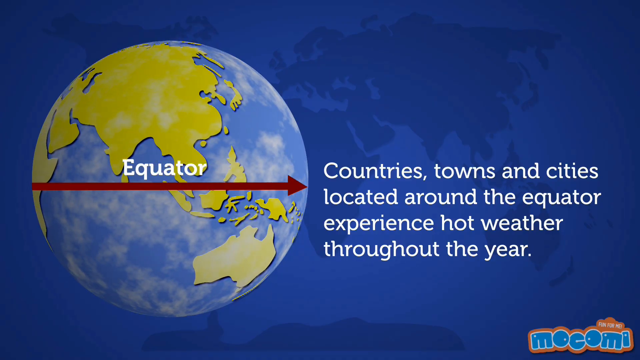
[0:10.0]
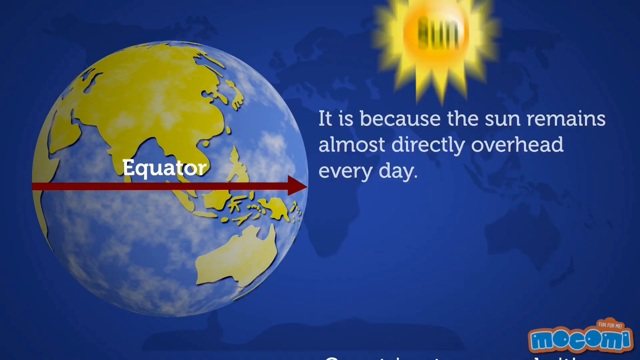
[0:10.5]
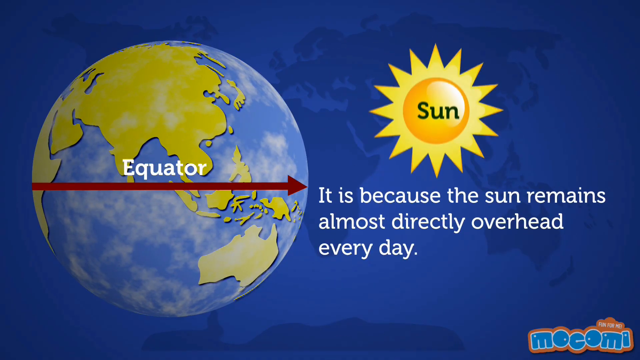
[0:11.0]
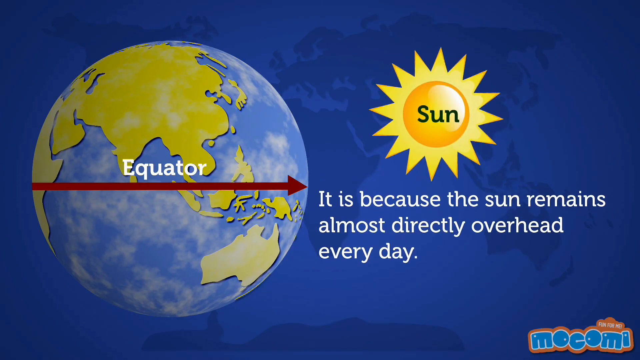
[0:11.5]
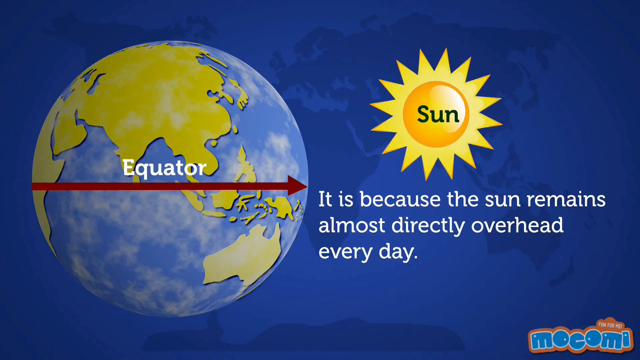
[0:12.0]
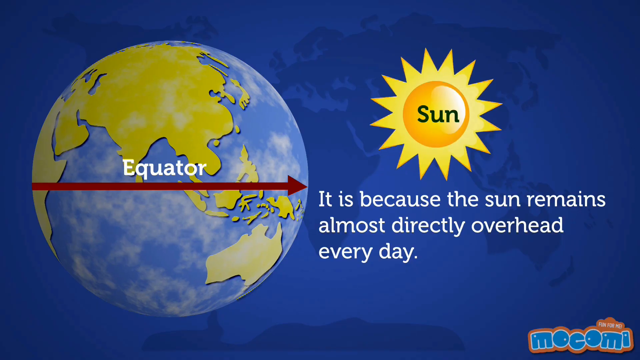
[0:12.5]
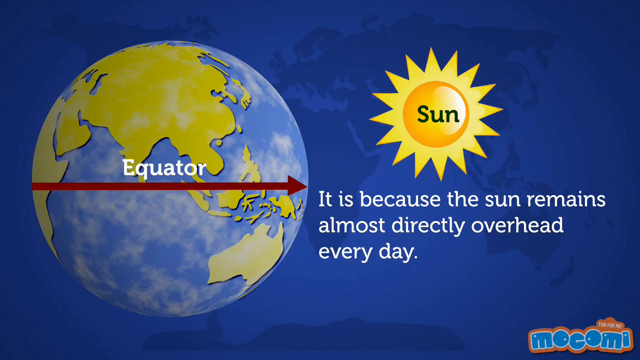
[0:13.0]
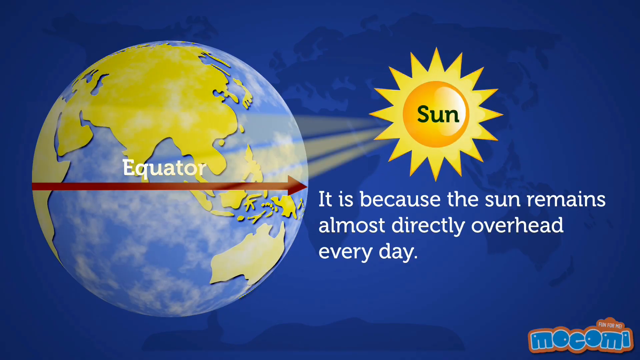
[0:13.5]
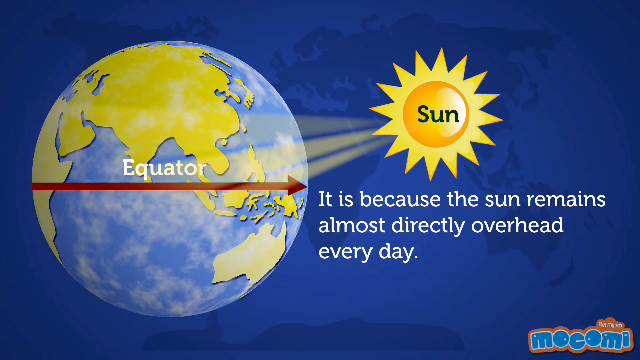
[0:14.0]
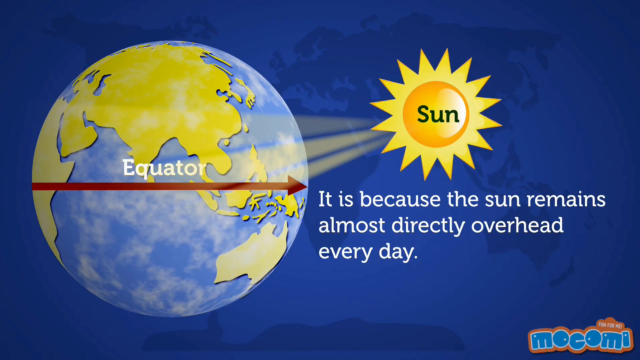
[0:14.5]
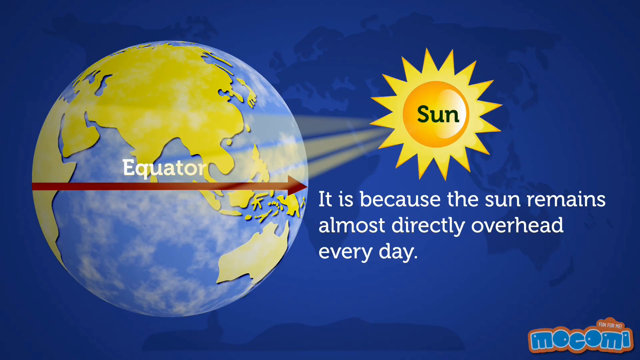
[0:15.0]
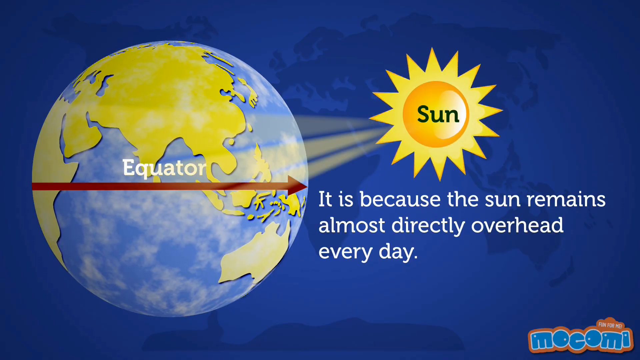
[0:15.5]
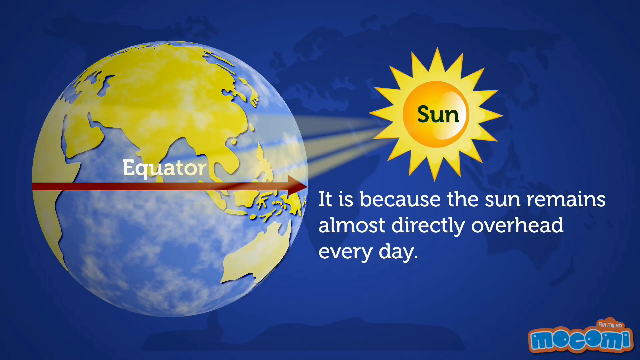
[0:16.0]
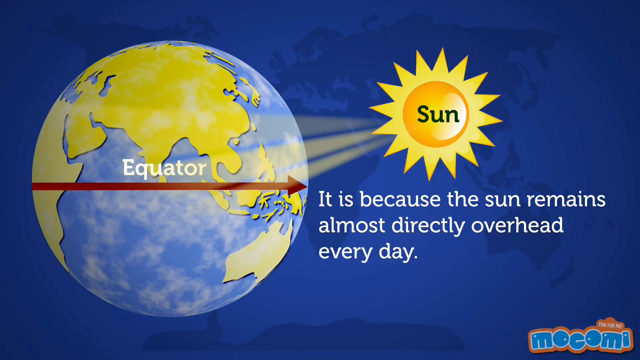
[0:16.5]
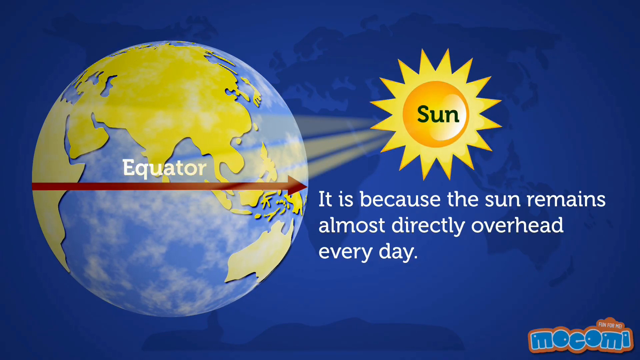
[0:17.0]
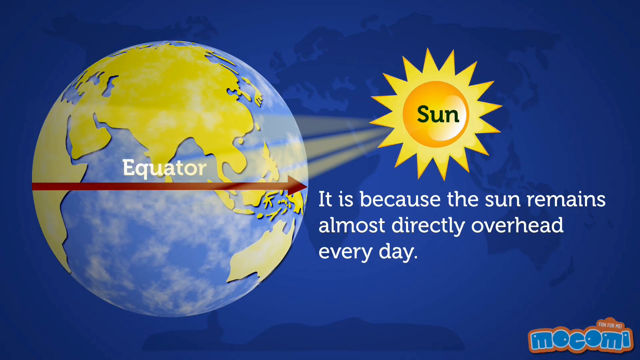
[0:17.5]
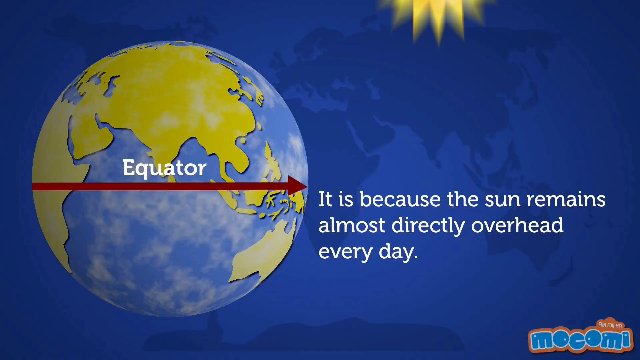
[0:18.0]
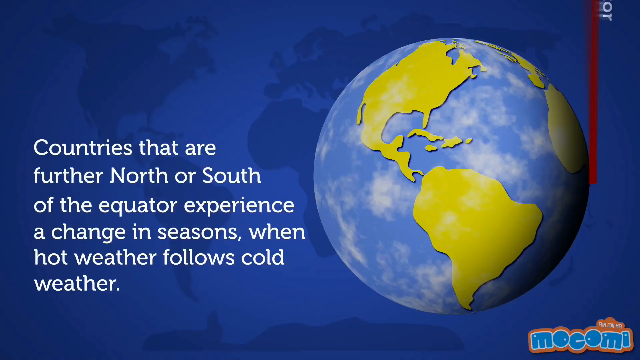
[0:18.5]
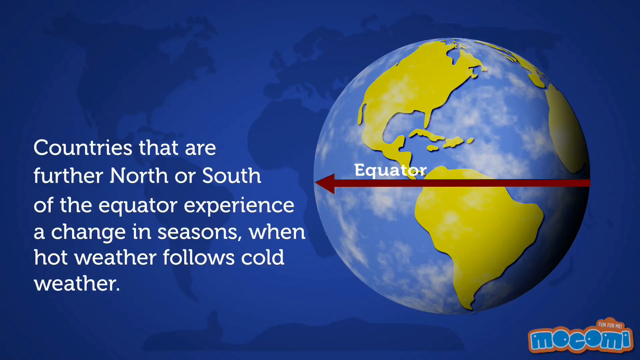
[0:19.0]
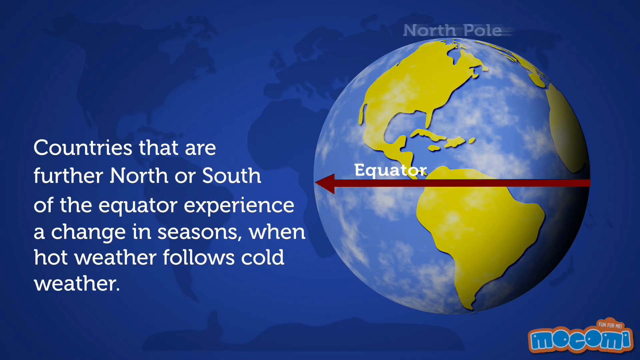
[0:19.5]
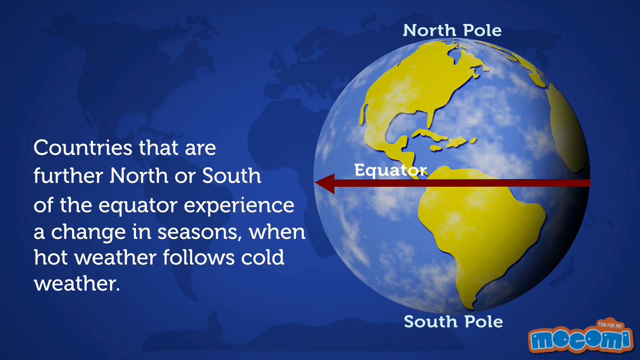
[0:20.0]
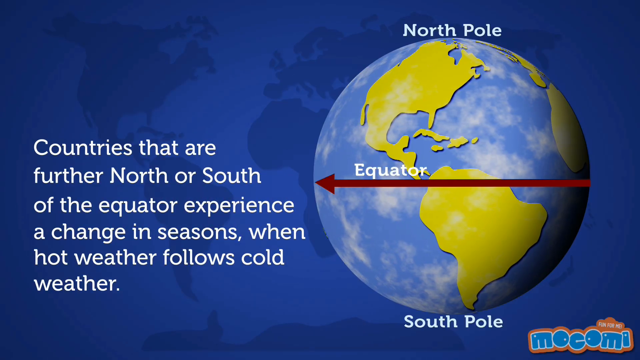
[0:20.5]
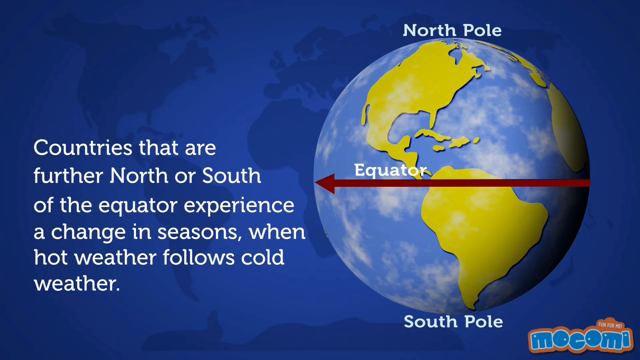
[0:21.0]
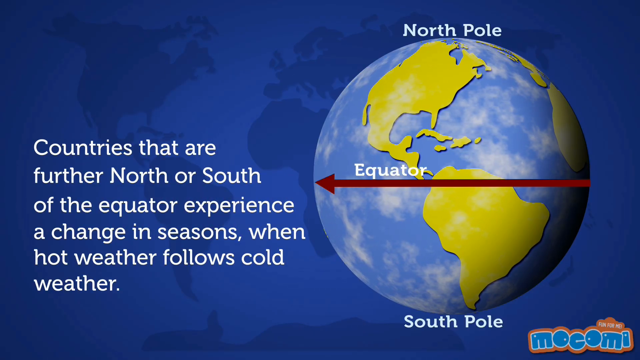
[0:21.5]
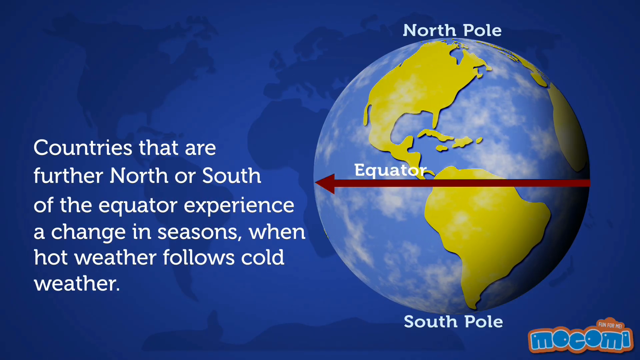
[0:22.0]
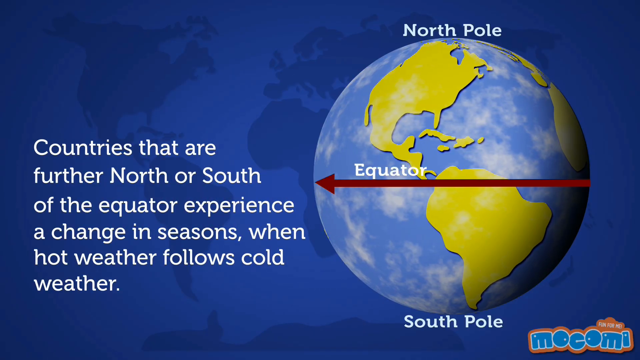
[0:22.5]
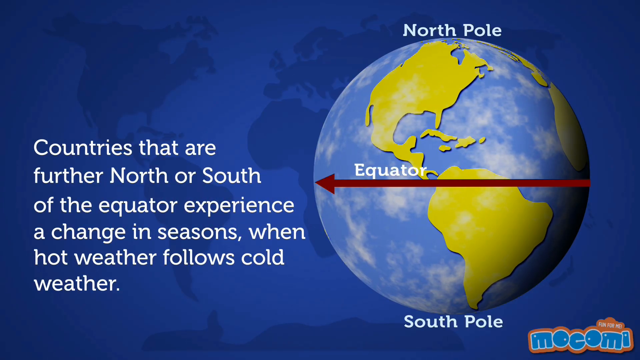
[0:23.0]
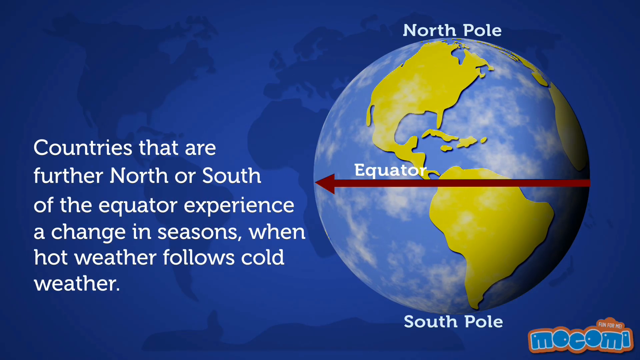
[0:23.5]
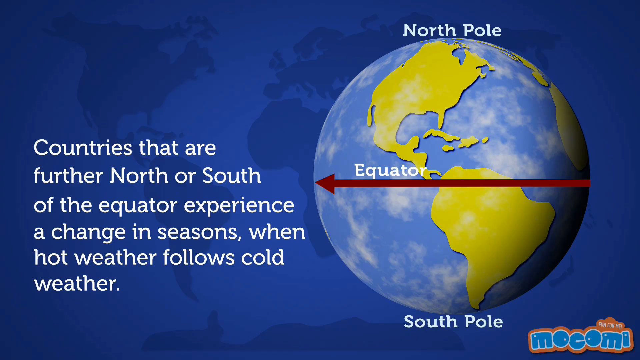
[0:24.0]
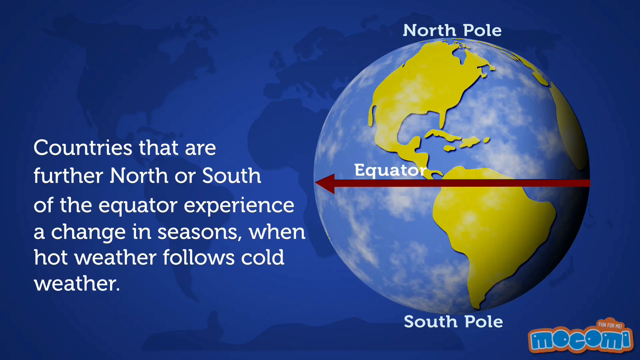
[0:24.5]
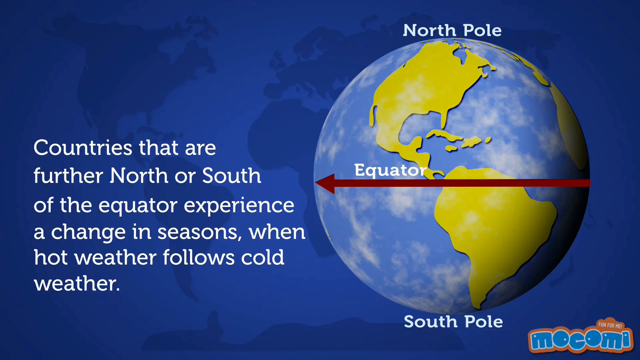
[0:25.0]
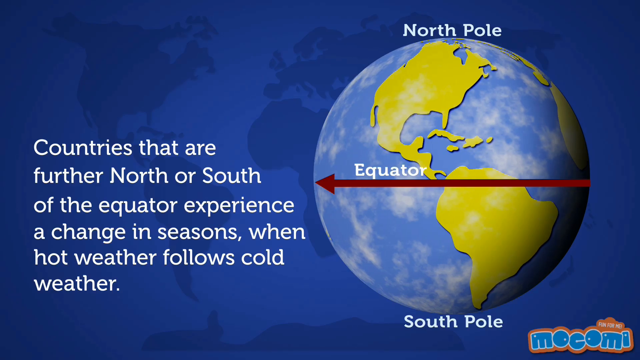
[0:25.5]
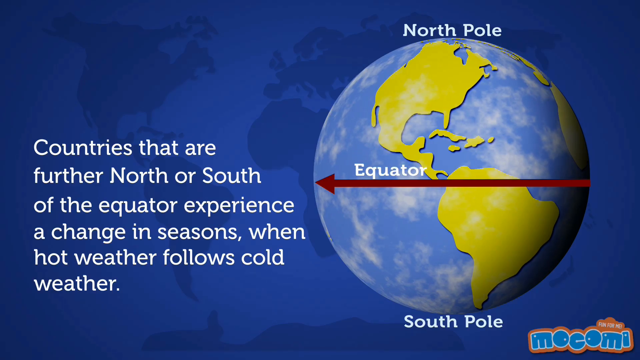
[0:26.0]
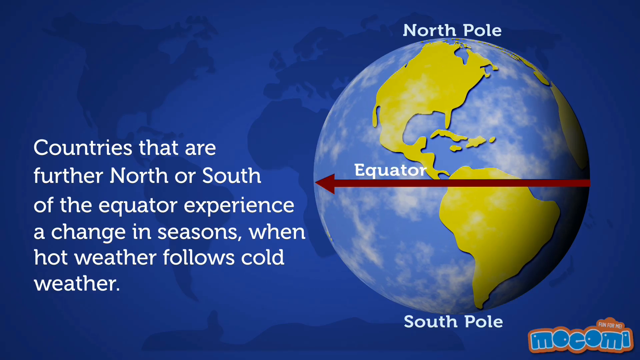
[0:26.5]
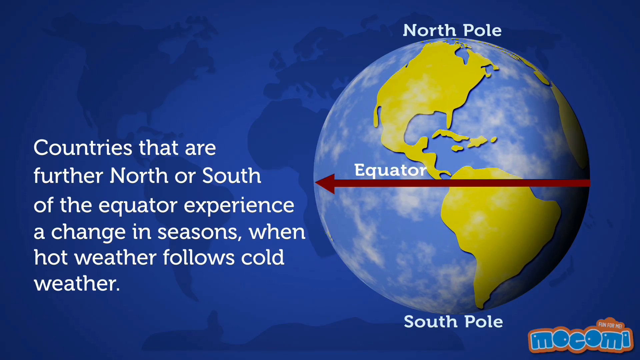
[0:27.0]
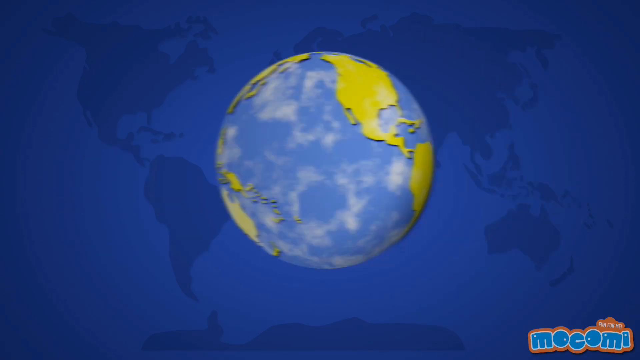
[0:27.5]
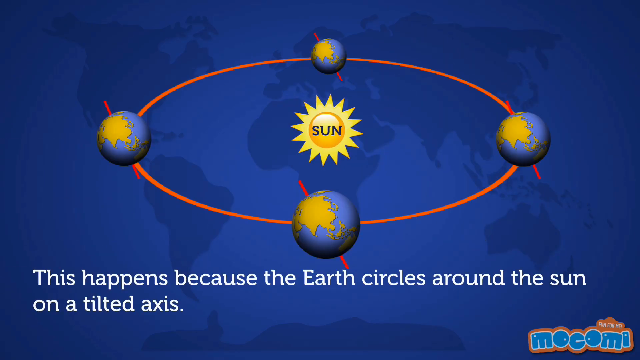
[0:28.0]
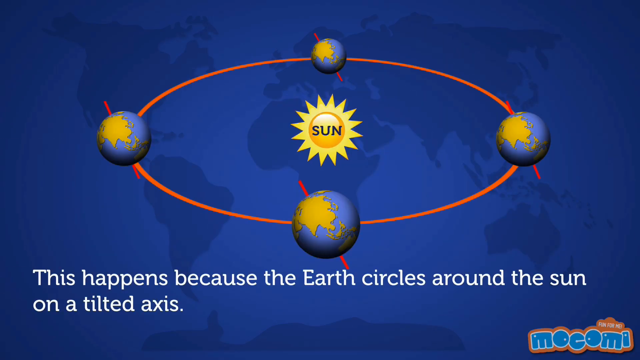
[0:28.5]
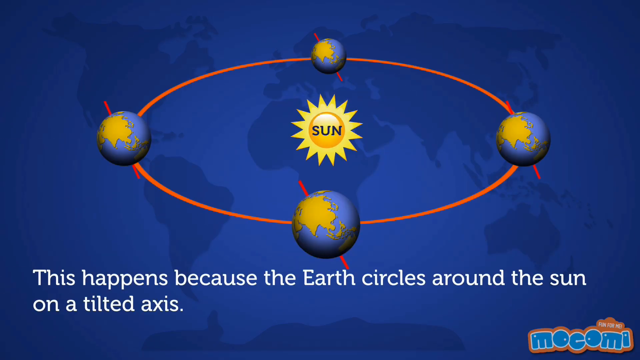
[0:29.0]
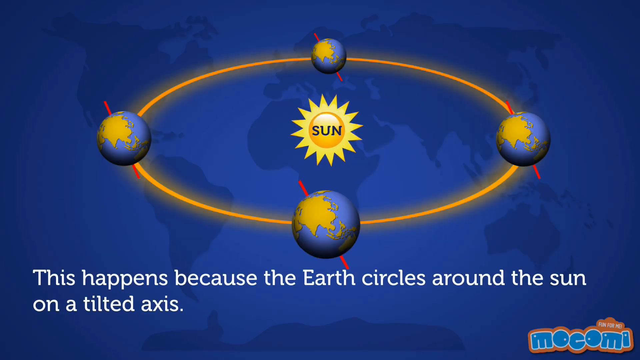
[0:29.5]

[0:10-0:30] The background is still the map in two different hues of blue. The planet continues rotating slowly, with lime green continents and no textures, and the water is a solid blue color with white, pillowy clouds over top of it. An elementary-looking sun appears, with its rays hitting the Earth in the area of the equator.